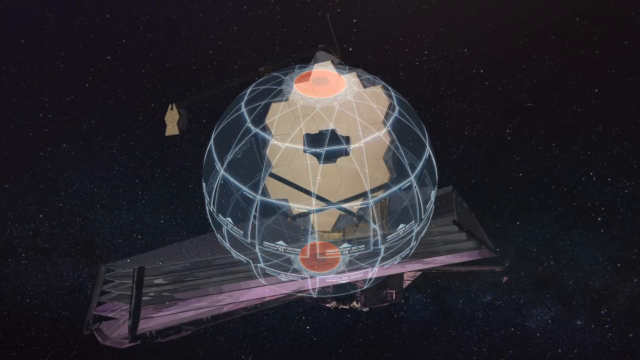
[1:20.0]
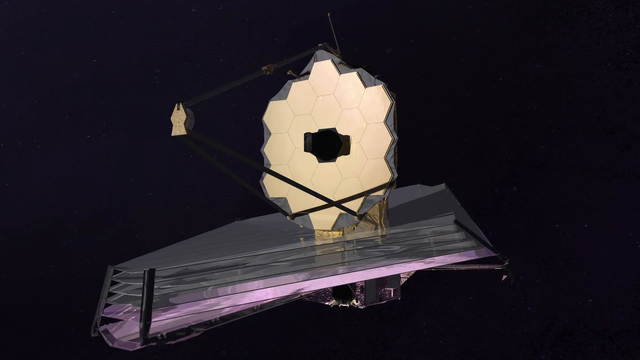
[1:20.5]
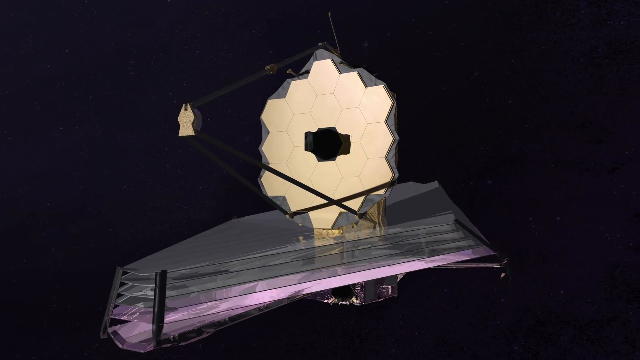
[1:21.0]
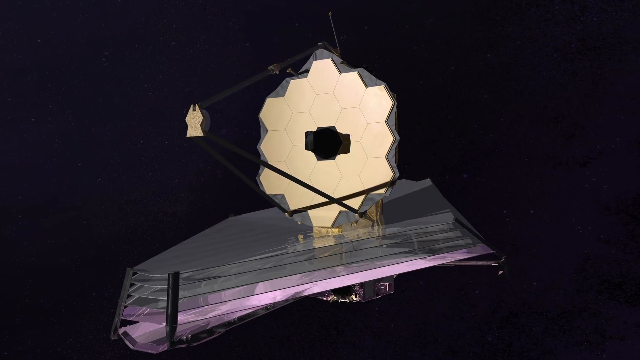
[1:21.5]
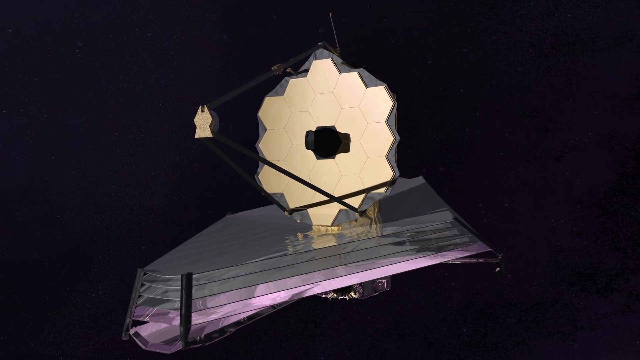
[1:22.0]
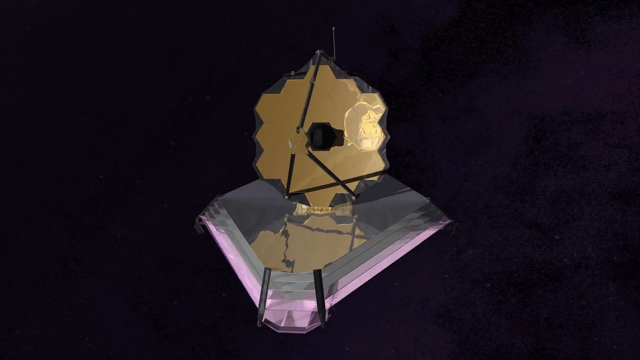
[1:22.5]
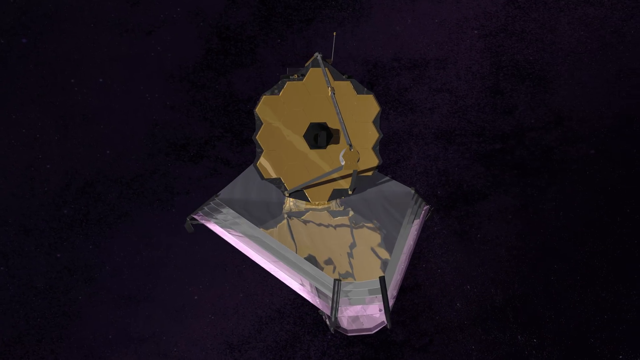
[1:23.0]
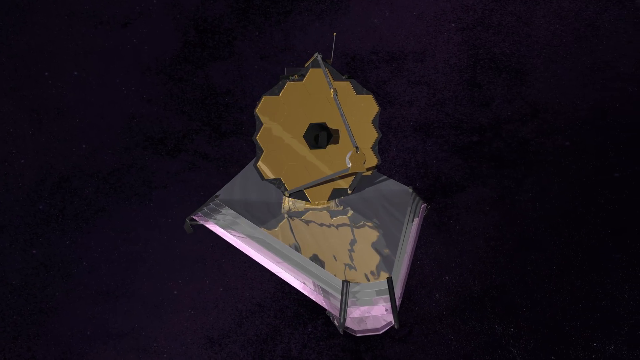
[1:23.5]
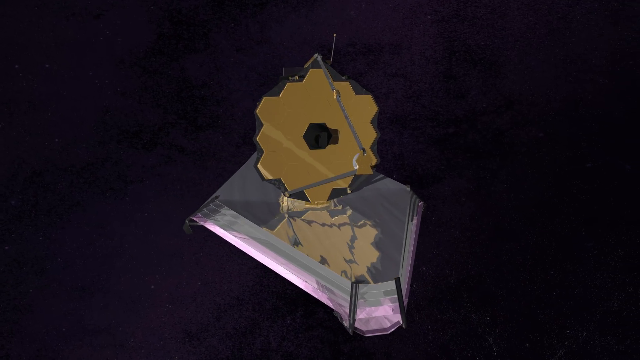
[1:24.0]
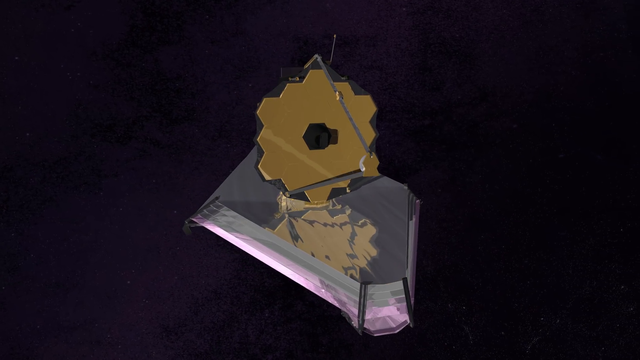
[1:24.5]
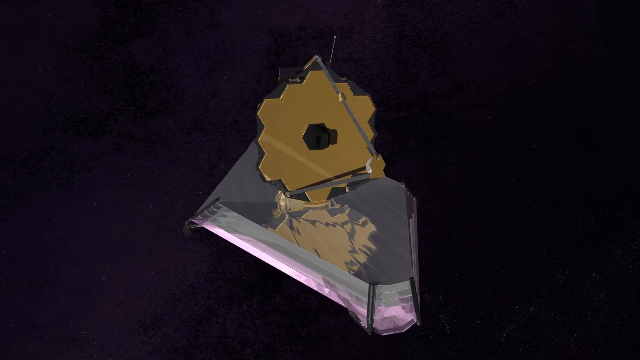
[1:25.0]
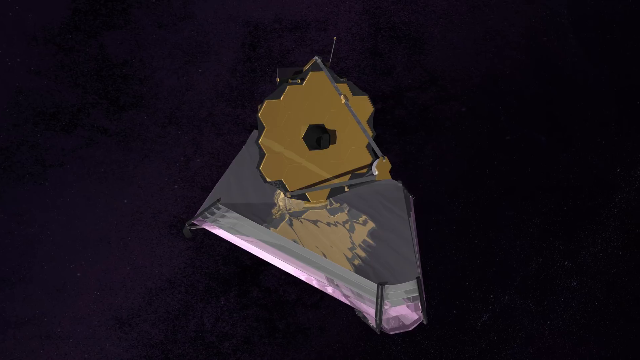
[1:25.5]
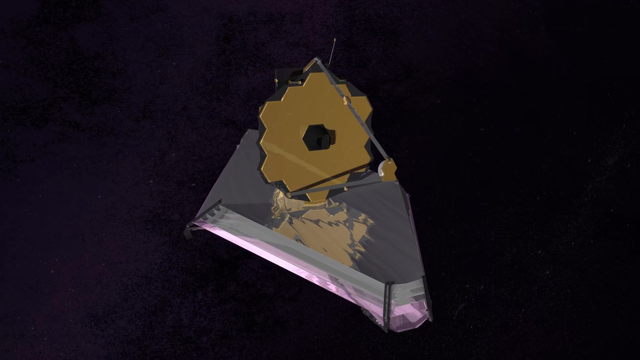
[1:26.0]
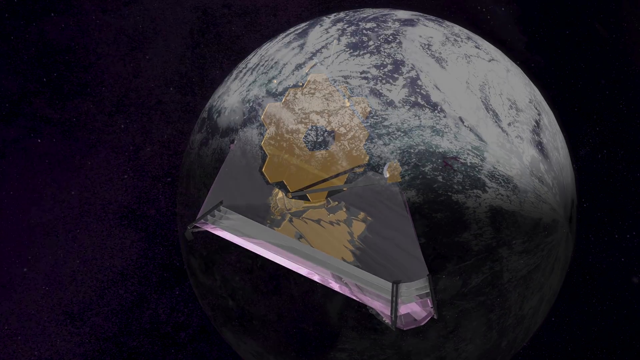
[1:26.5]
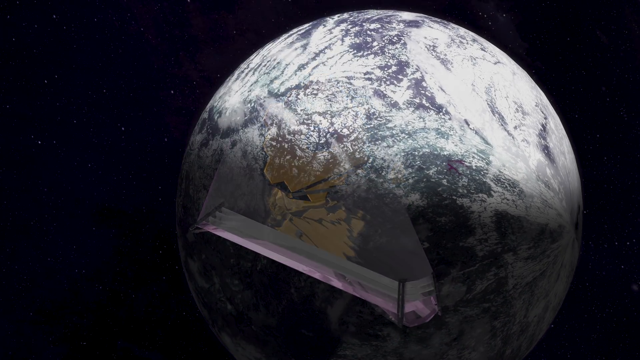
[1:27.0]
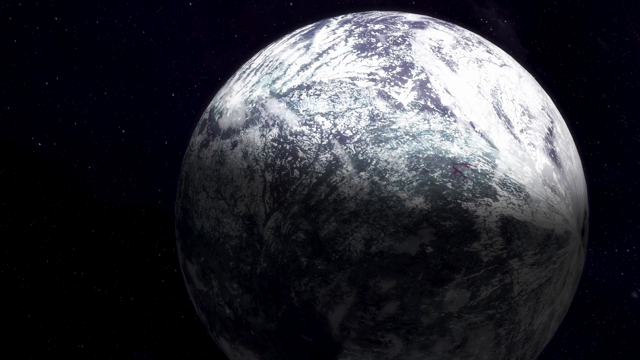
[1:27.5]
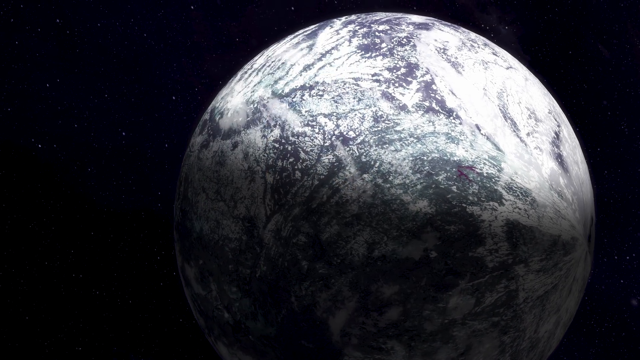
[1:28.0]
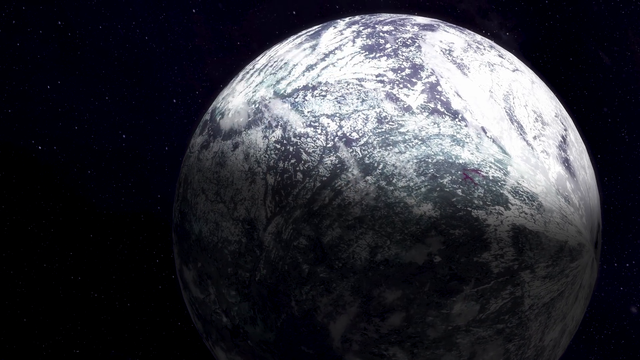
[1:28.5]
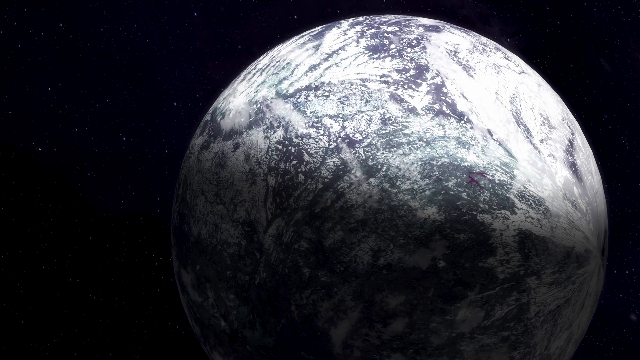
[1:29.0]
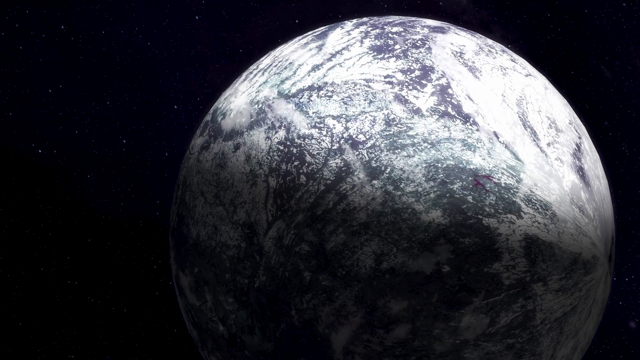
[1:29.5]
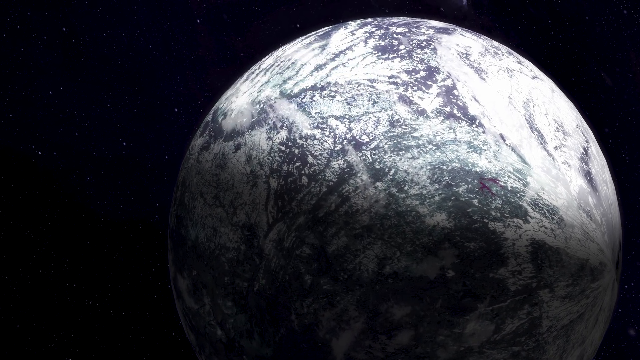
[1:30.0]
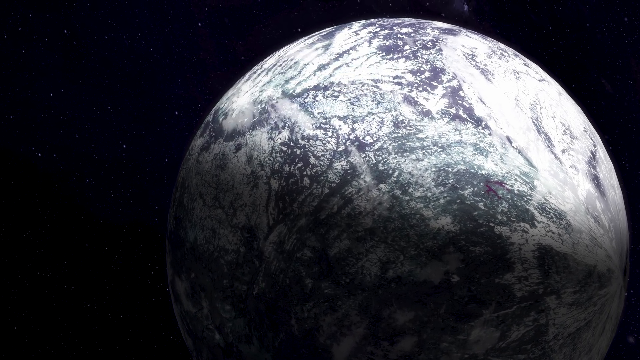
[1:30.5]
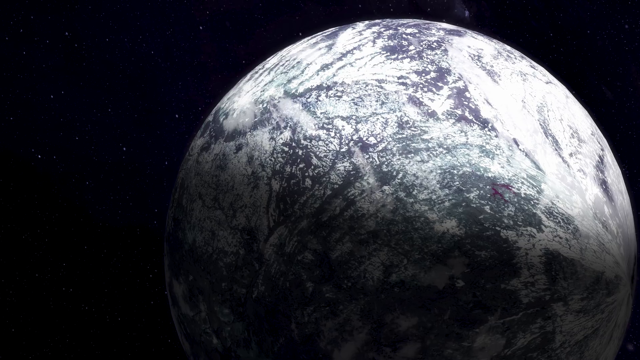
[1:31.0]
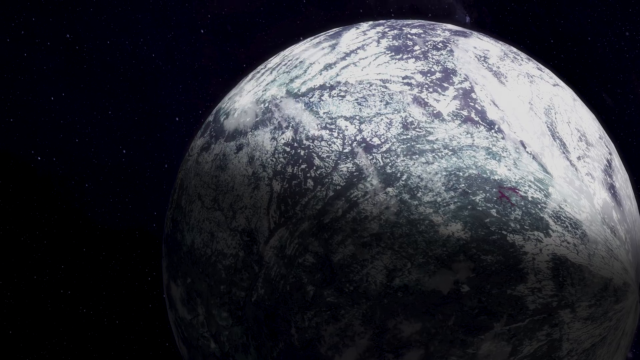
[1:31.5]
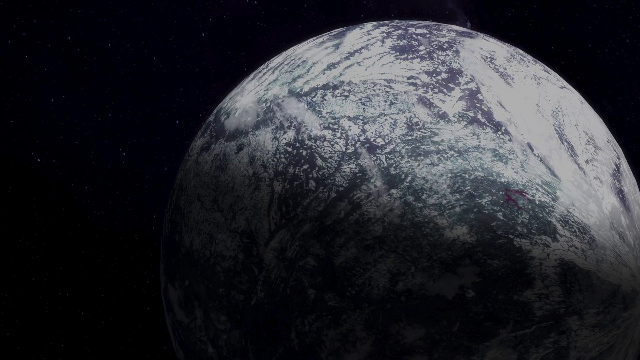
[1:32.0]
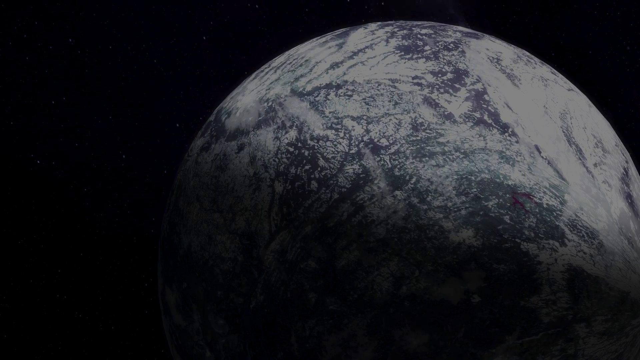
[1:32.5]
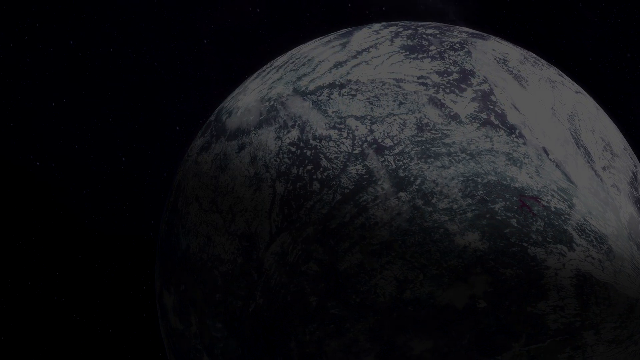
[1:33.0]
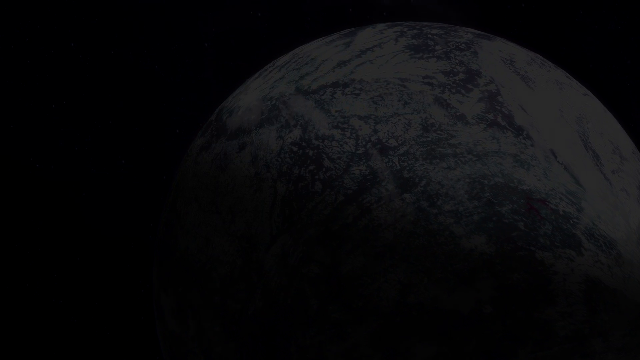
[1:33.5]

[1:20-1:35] A 3D animation about a NASA project shows what looks like layers of horizontal strips stacked one on top of another, about four layers in shades of grey. On top of them is an oval shape with a cutout in the middle; it is pale gold and has segments that look like honeycombs. The 3D shape revolves. Next, a close-up view shows the globe of the Earth in monochrome greys and white against a dark space background. The globe pans towards the viewer as it slowly fades away.